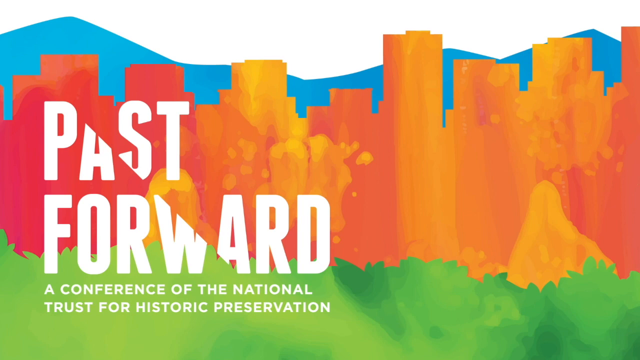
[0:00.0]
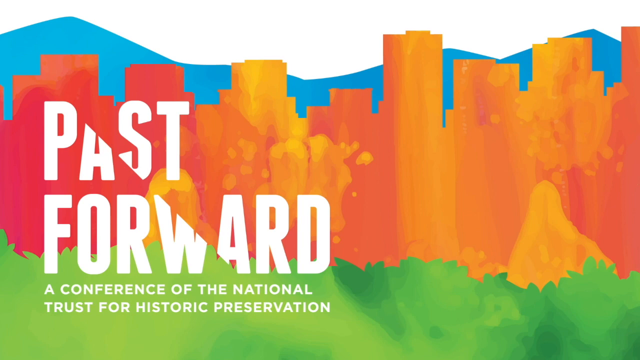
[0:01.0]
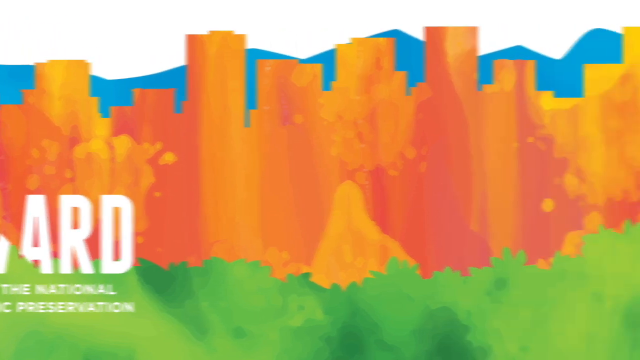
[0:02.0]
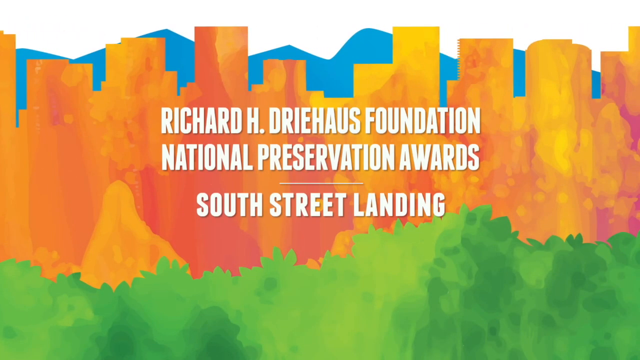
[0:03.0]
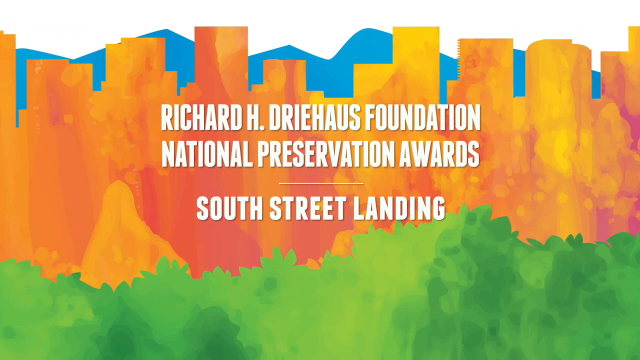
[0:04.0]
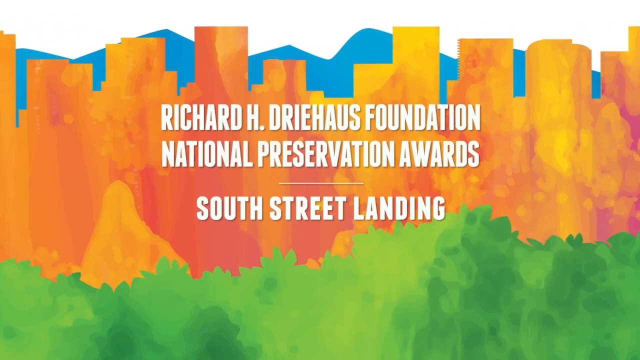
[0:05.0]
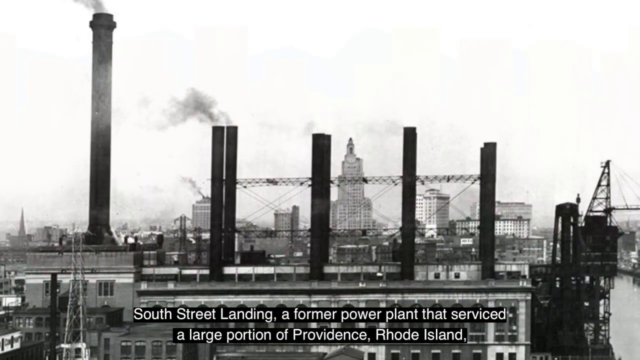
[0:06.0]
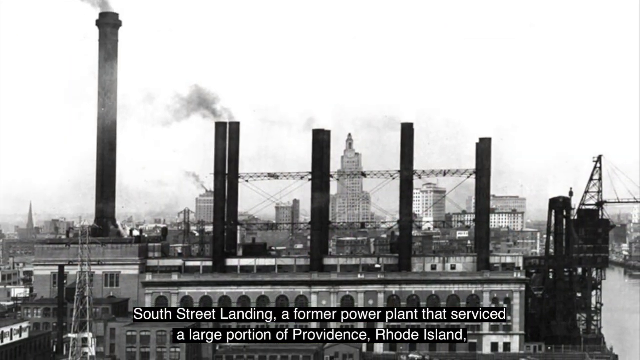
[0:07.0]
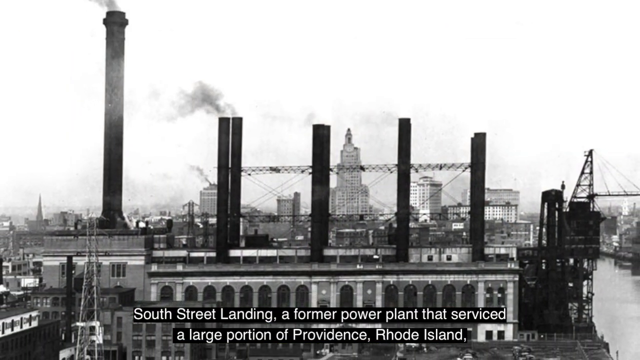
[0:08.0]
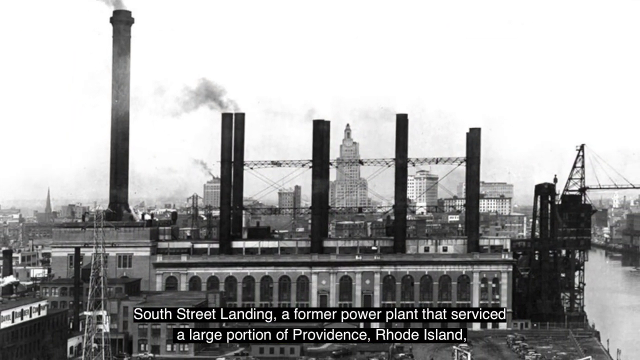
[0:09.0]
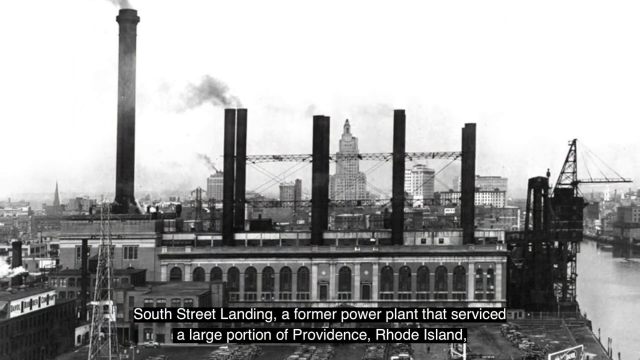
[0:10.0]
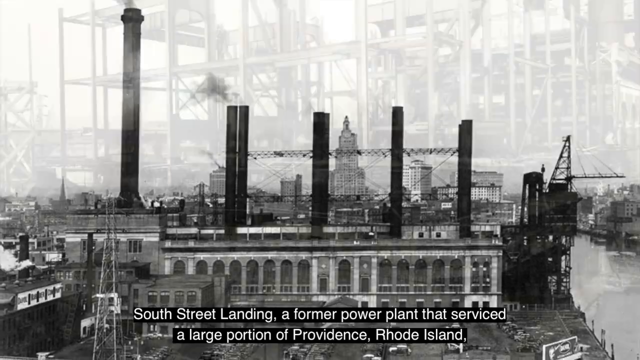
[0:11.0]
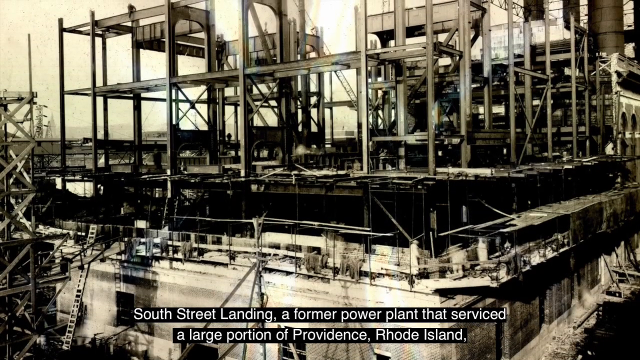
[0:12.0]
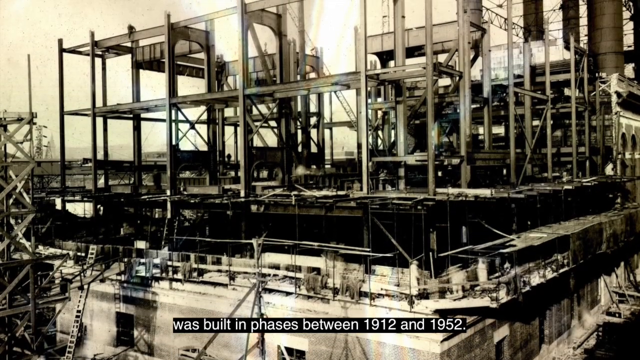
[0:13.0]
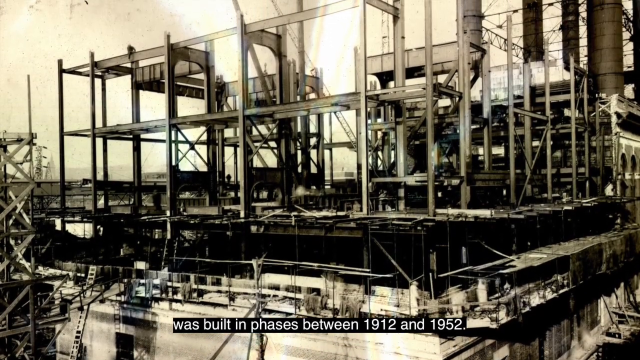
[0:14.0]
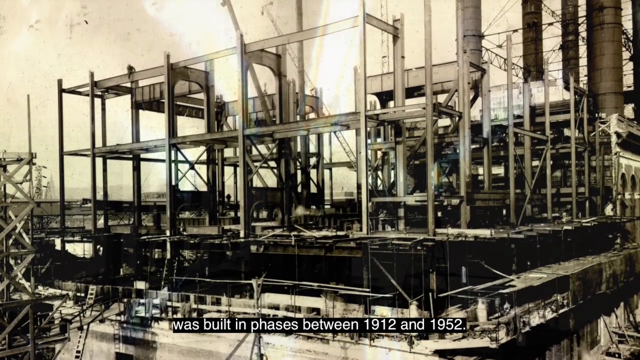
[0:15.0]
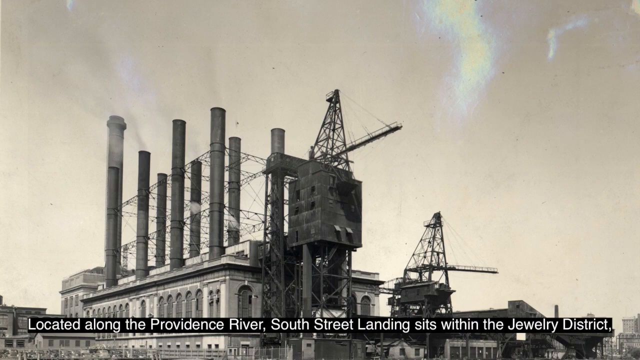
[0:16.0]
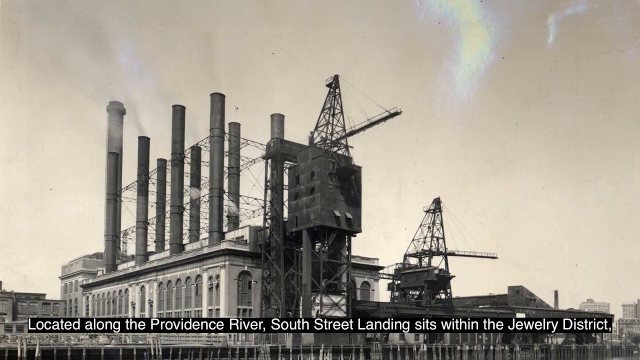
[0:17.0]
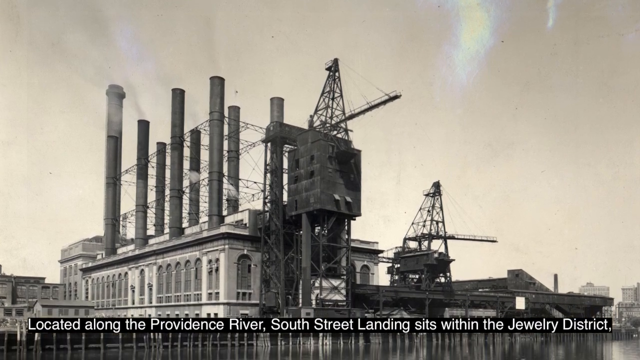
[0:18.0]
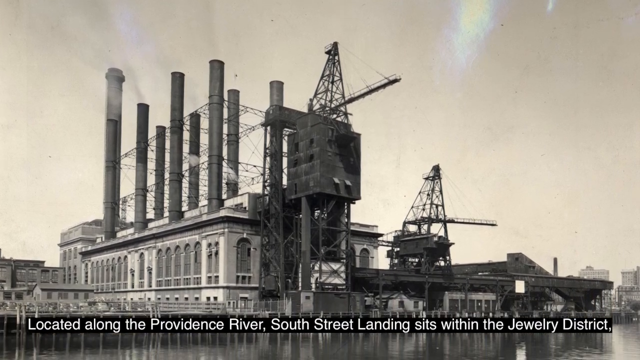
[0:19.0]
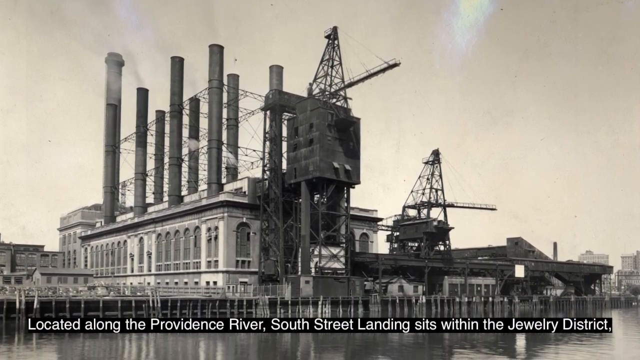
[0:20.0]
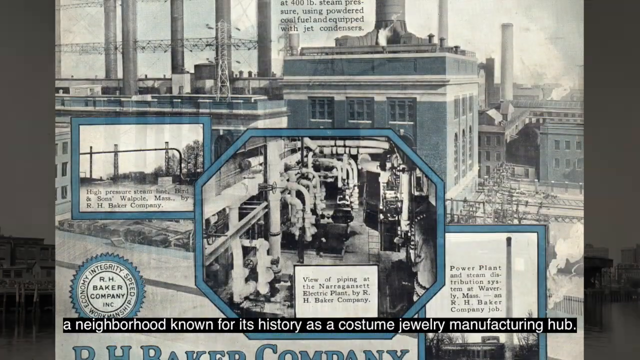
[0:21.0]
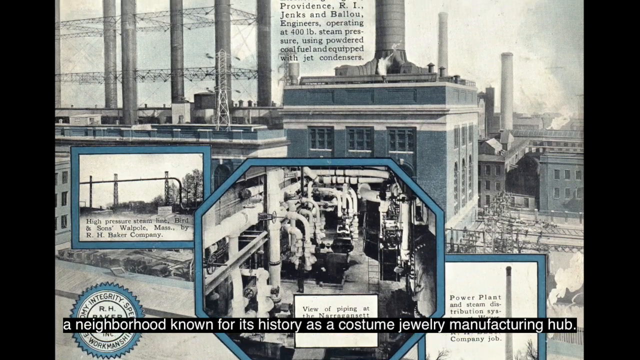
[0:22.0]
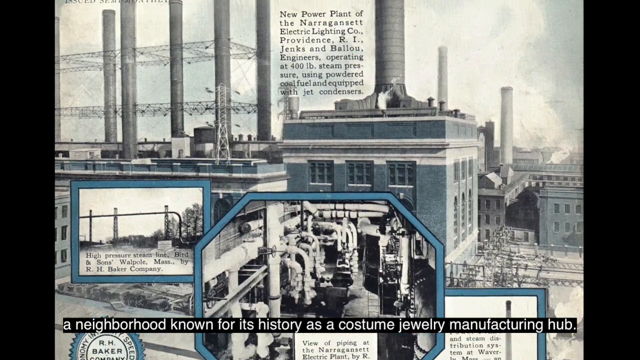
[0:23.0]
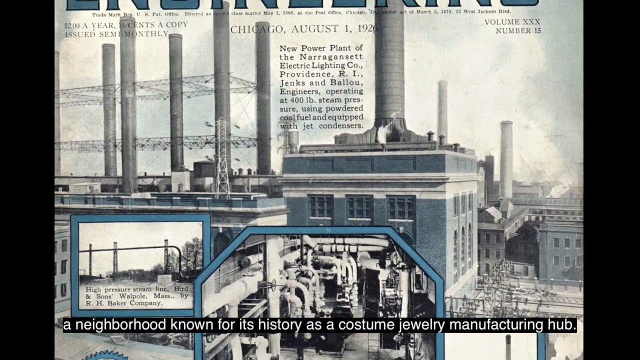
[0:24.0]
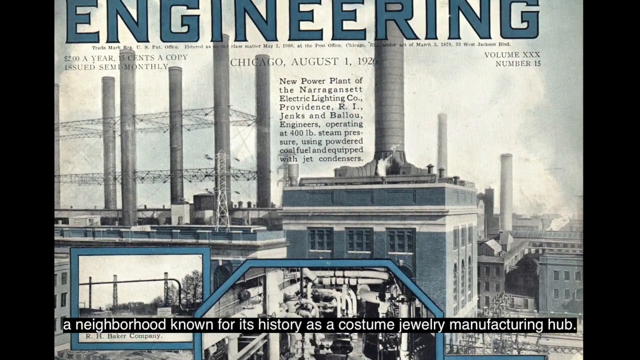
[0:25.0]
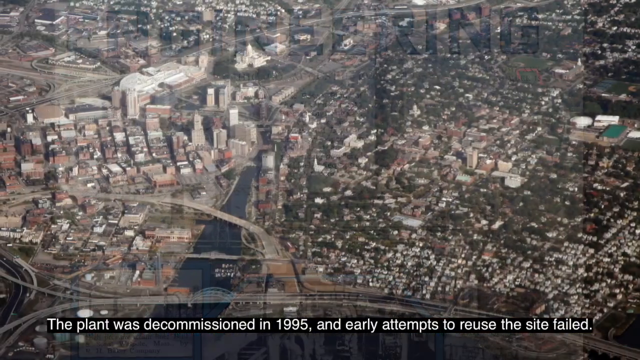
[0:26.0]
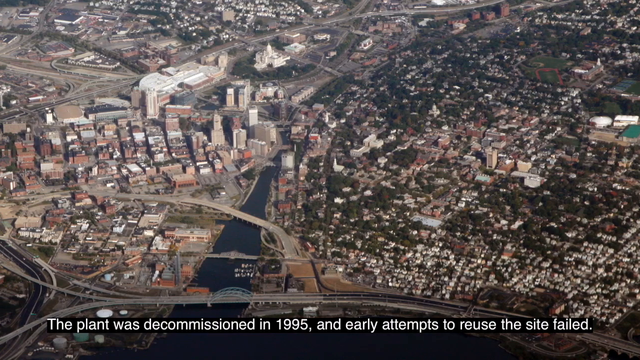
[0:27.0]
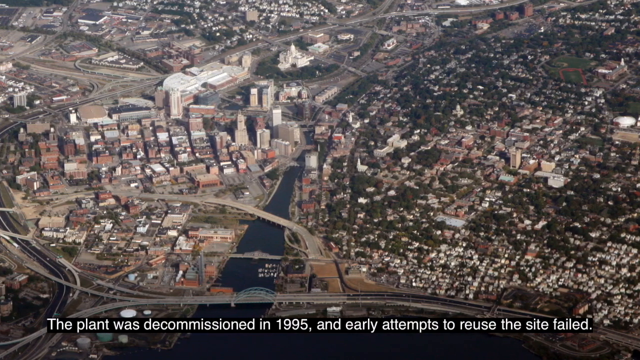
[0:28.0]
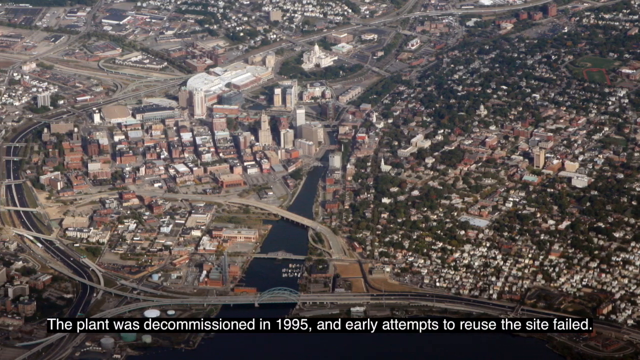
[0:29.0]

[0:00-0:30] A colorful design screen opens the video: the bottom is green, the middle has red and orange skyscraper outlines, above that is a shade of blue, and the very top of the screen is a shade of white. White text reads "passed forward a conference of the National Trust for Historic Preservation." The camera slides to the right over the same background, and the text now reads "Richard H. Driehaus Foundation National Preservation Awards, South Street Landing." The scene changes to a black and white photo of a city with the text "South Street Landing, a former power plant that serviced a large portion of Providence, Rhode Island." Next is a black and white image of a large construction framing project with the text "was built in phases between 1912 and 1952." The following image appears to show a half-finished building with lots of large pipes going upwards towards the sky. Next, various smaller window-like images, all black and white and each with small black text and an image, are at the bottom, over a background of a large building that looks like a power plant, also in black and white. The text reads "a neighborhood known for its history as a costume jewelry manufacturing hub." The camera continues to scroll up and the title says "engineering." The last image is an aerial, drone-view-style image of a city with the text "the plan was decommissioned in 1995 and early attempts to reuse the site failed."